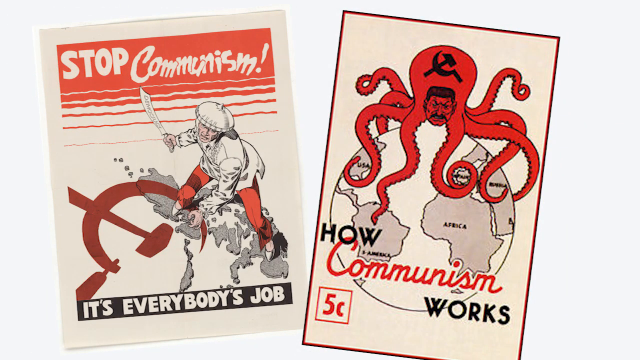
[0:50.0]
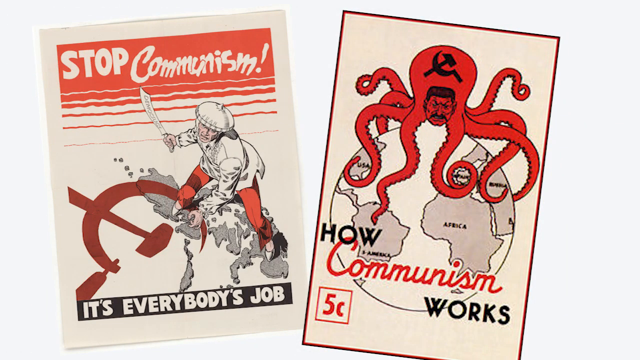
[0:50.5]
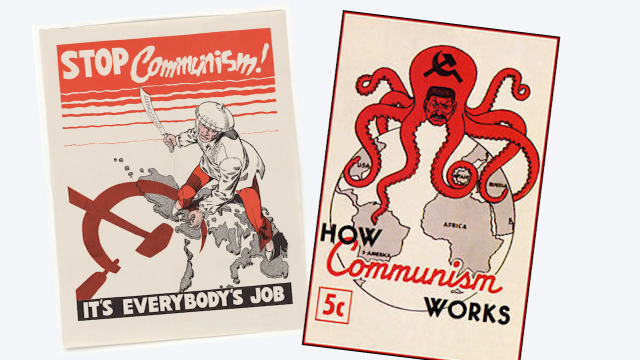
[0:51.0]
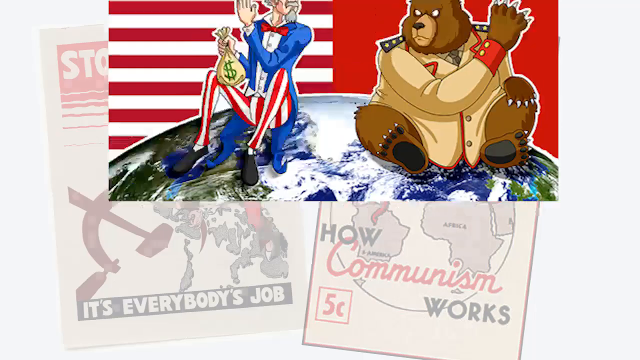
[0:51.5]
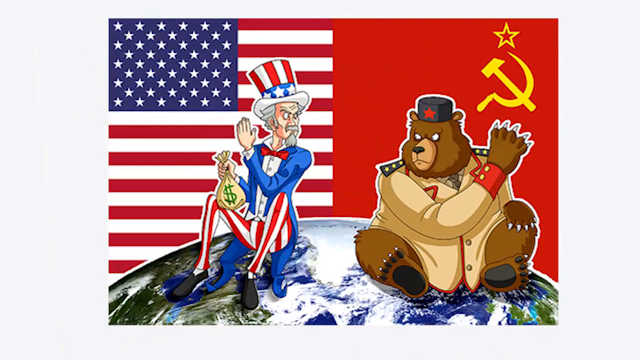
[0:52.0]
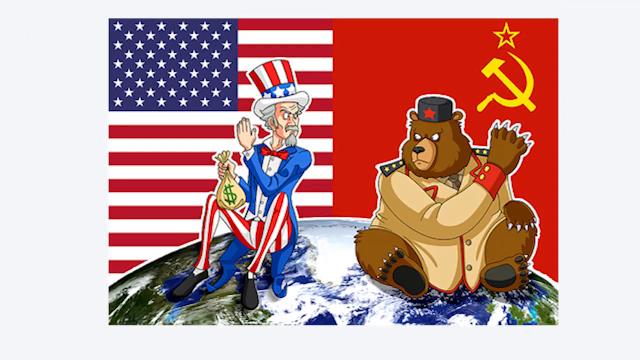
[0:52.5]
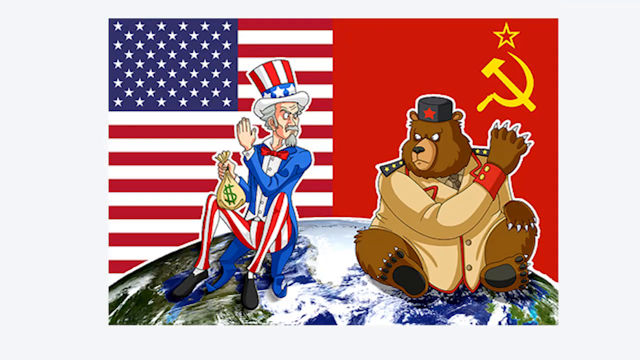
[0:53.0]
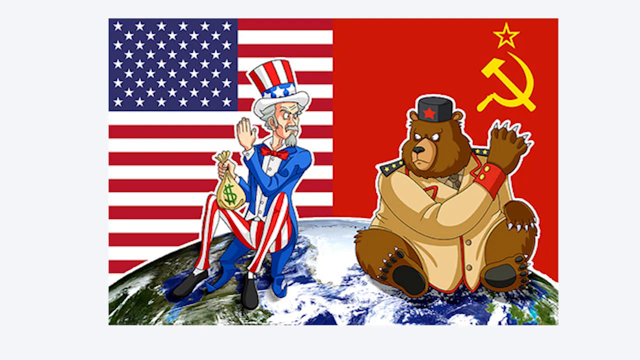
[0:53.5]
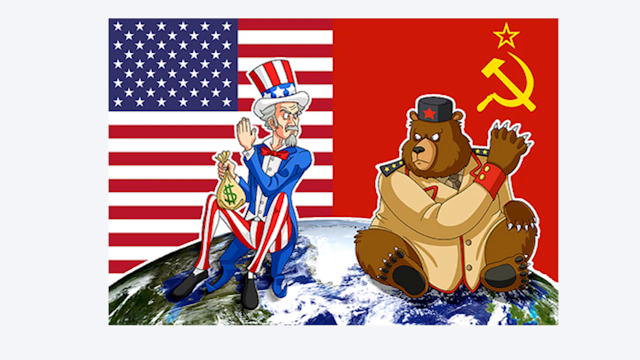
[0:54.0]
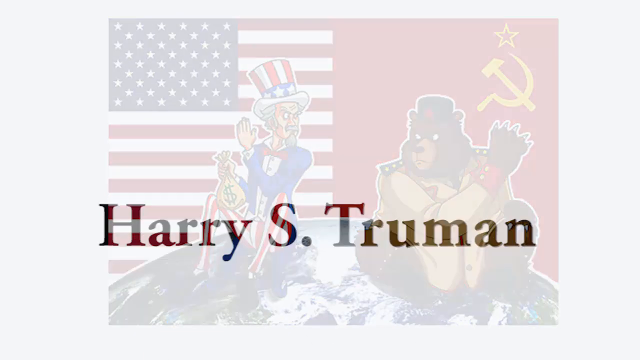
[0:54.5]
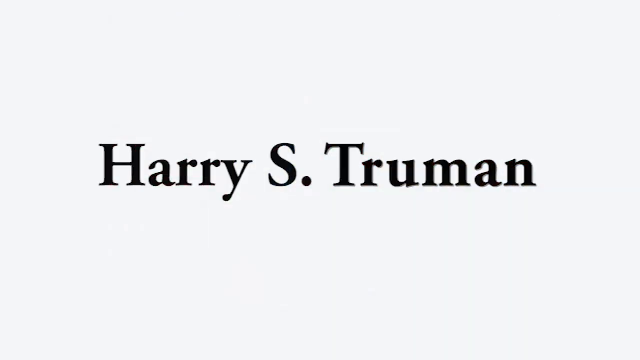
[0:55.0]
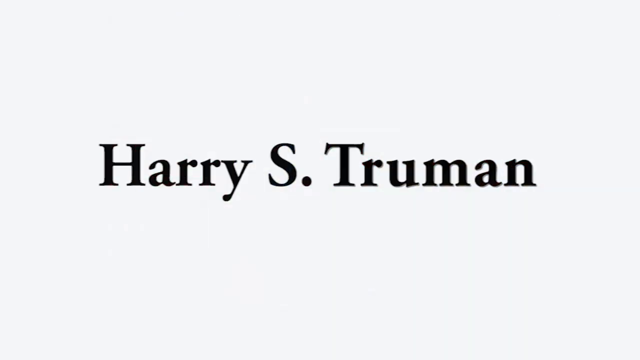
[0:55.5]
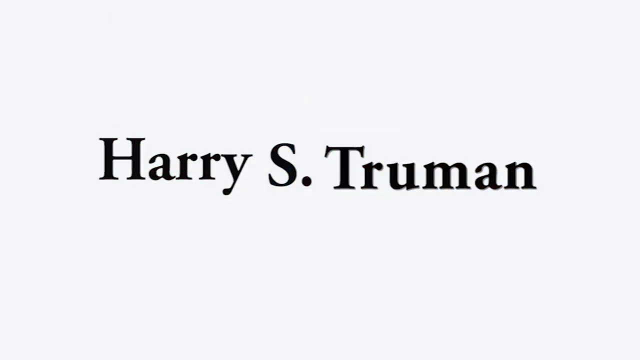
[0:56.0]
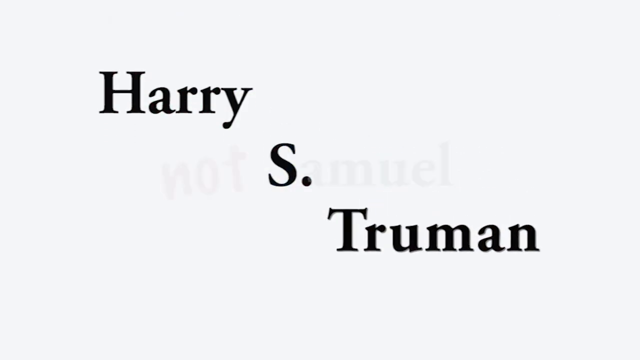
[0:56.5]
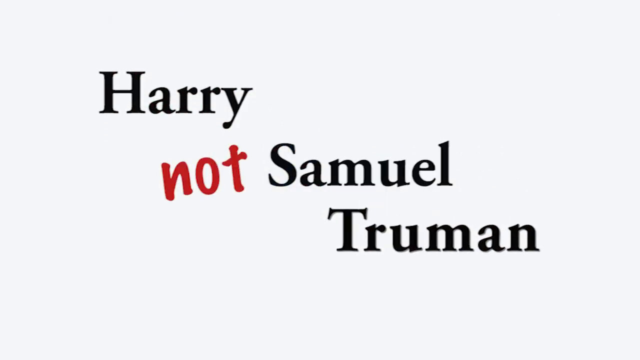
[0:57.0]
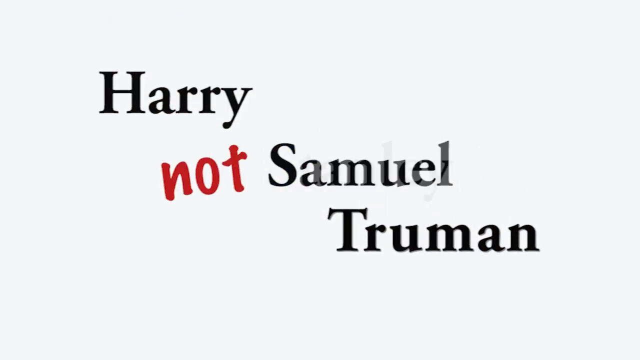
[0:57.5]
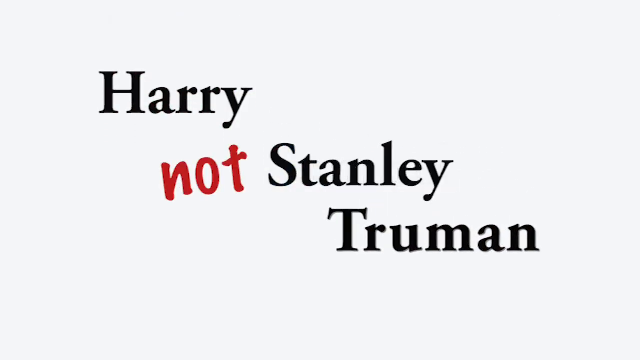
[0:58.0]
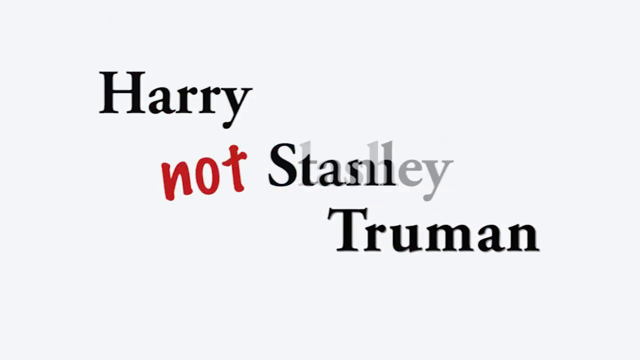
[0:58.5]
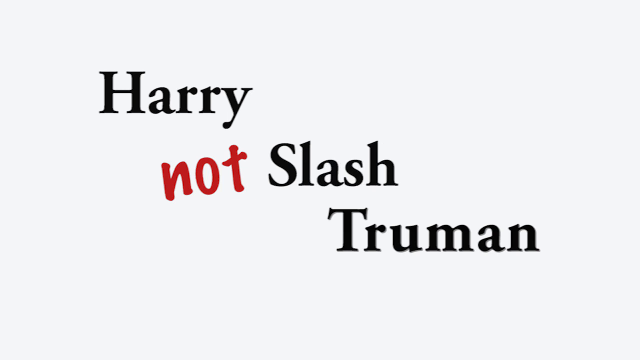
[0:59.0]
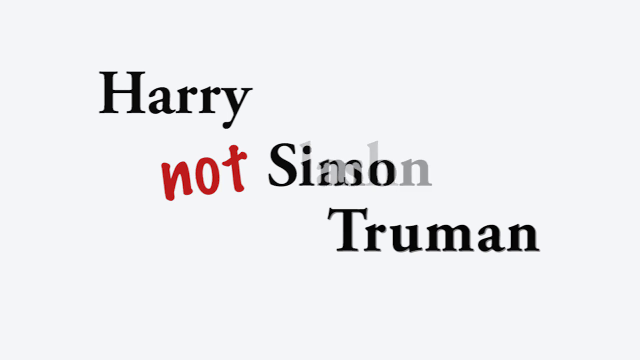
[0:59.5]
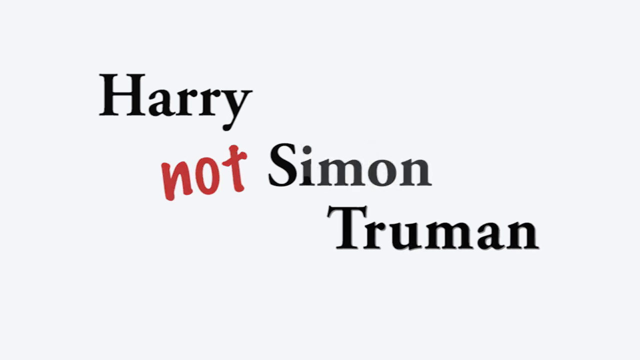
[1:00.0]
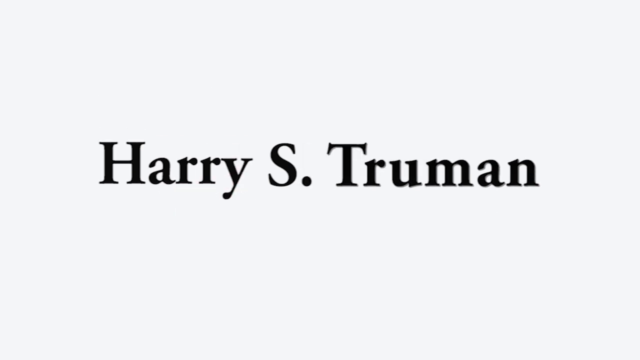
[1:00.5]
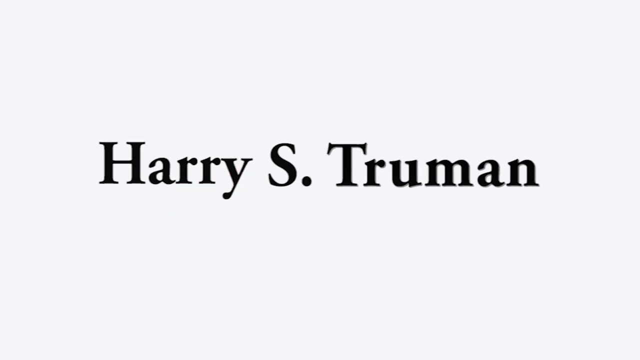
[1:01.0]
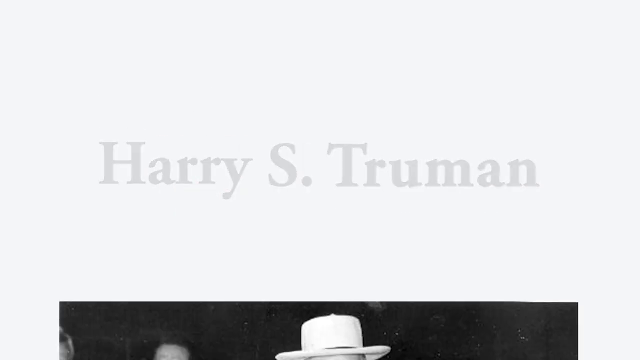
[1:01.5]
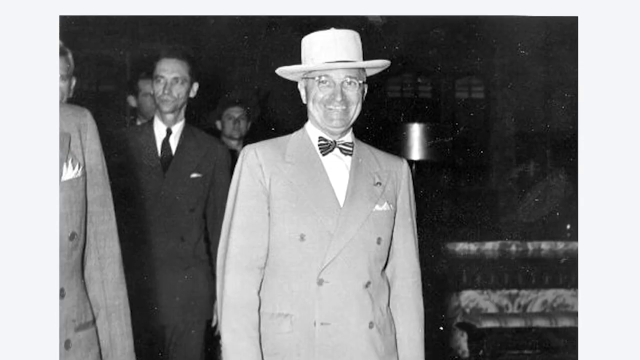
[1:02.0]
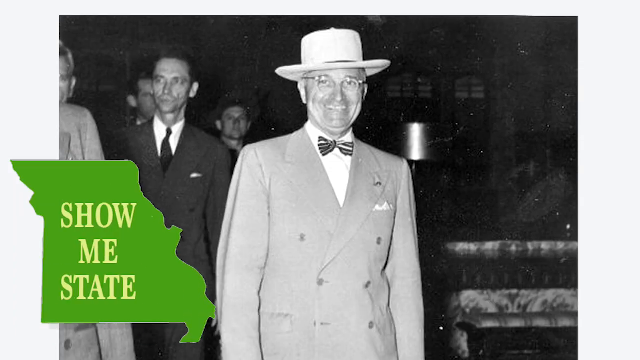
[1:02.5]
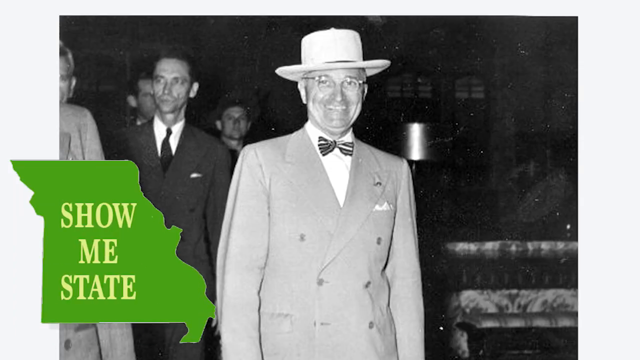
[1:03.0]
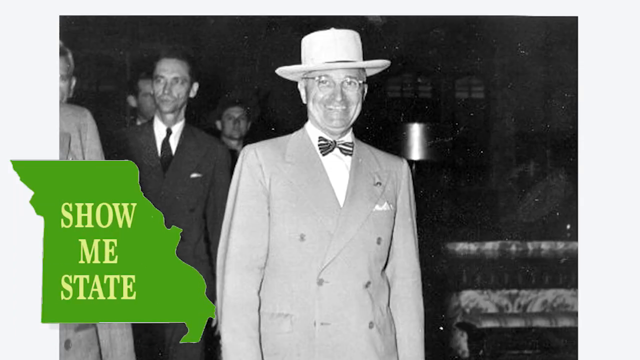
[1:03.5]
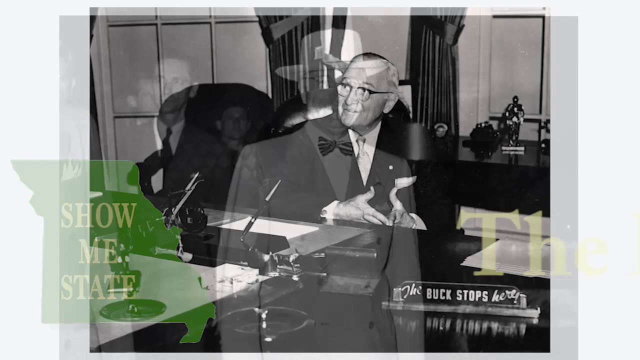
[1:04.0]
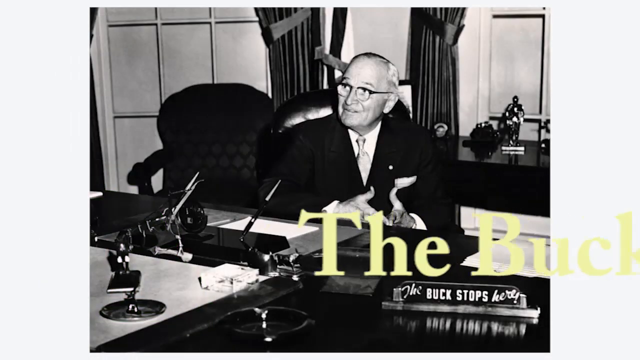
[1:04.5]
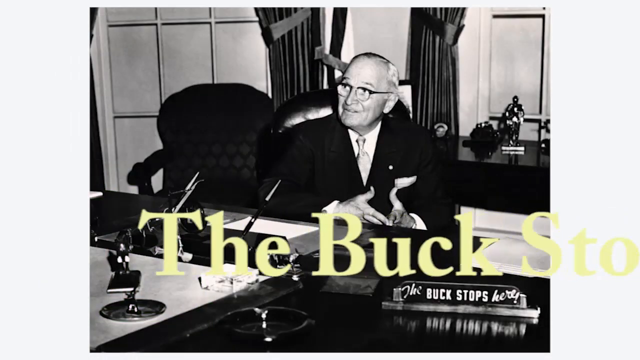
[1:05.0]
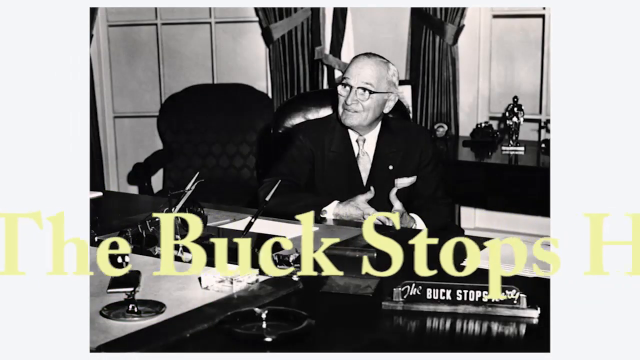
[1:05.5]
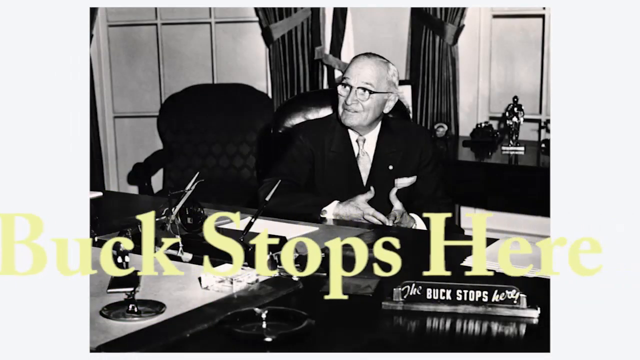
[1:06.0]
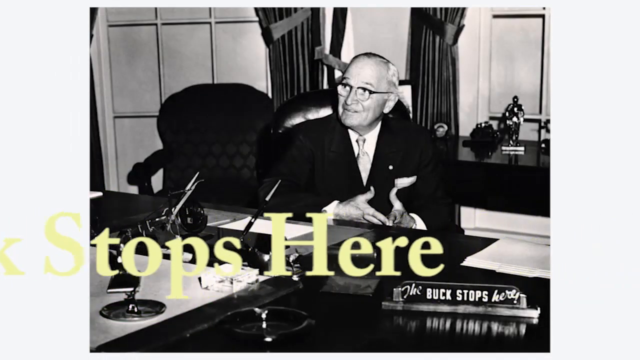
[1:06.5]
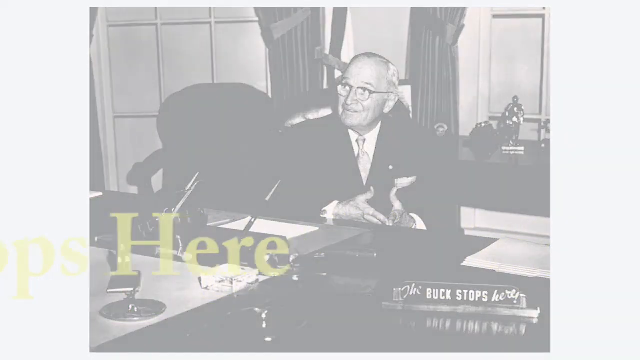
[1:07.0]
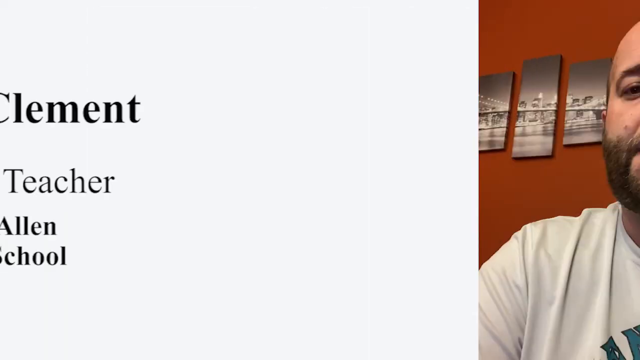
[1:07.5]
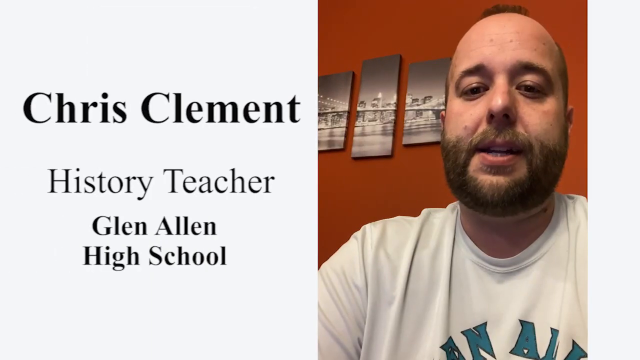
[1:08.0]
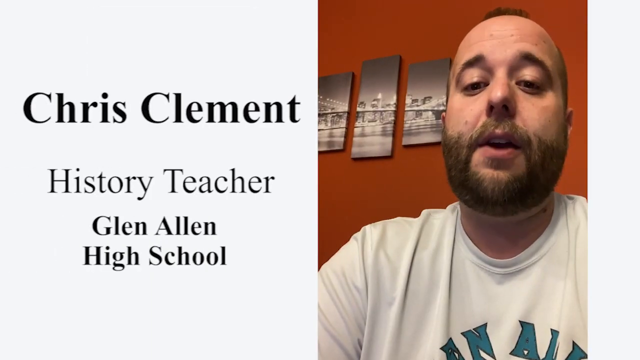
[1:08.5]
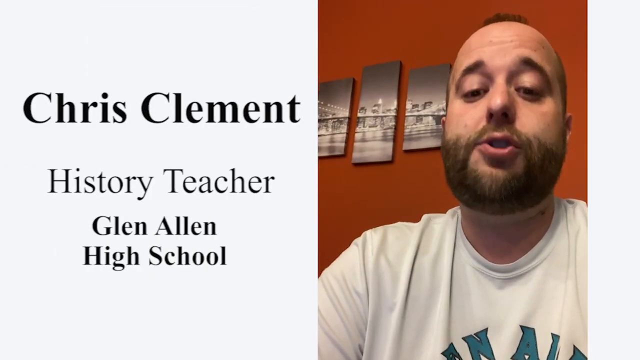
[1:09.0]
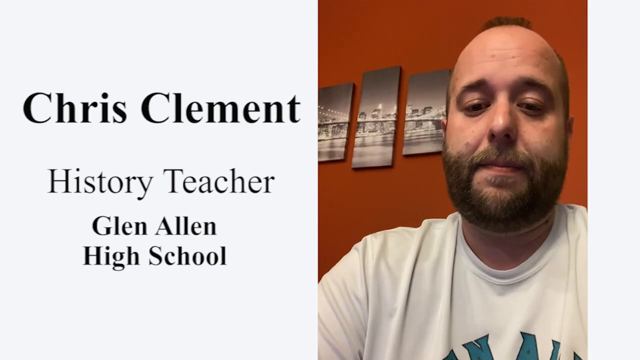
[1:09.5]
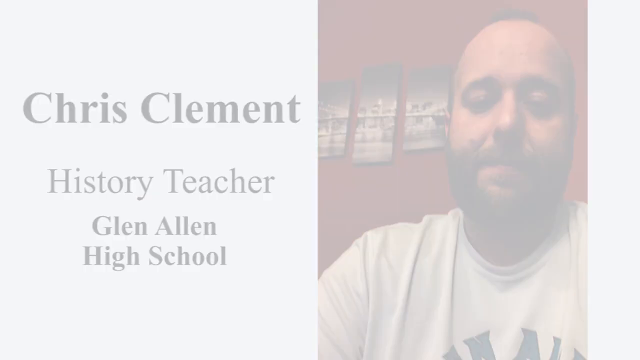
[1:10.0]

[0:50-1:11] The anti-communist propaganda posters are on screen, their colors mostly in shades of red. Next comes a more modern political cartoon of a cartoonish Uncle Sam sitting next to a cartoonish Russian bear on top of the world, with the American flag behind Uncle Sam and the Soviet flag behind the bear. Both have a hand raised with the back of the hand facing forward, as if about to backhand the other, and they are kind of looking at each other menacingly. This is on screen for just a moment, and then the text "Harry S. Truman" appears. The words "Harry" and "Truman" move up and down respectively, leaving the S in the middle, and animations indicate that the S does not stand for Samuel, then Stanley, then Slash, then Simon, indicating that the S stands for nothing. A photo of a smiling Harry Truman then pops up; he wears a white top hat of sorts and a bow tie, with a few people in the background. On the left is an image of the state of Missouri reading "the Show Me State." Then another image shows Truman sitting at what is apparently the Resolute Desk in the Oval Office, looking a little older. Text comes in from the left and moves all the way across the screen reading "The Buck Stops Here," and in the photo there is also a little sign on the desk that says "The Buck Stops Here." Chris Clements then comes back, looking at the camera, and his lips can be seen moving to say "Harry S. Truman."